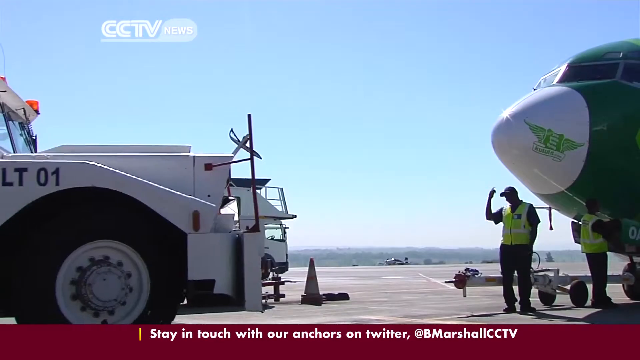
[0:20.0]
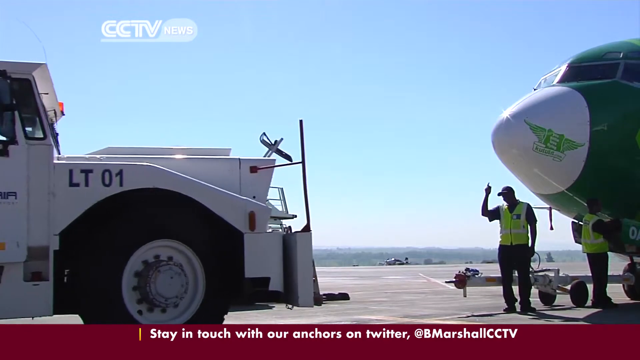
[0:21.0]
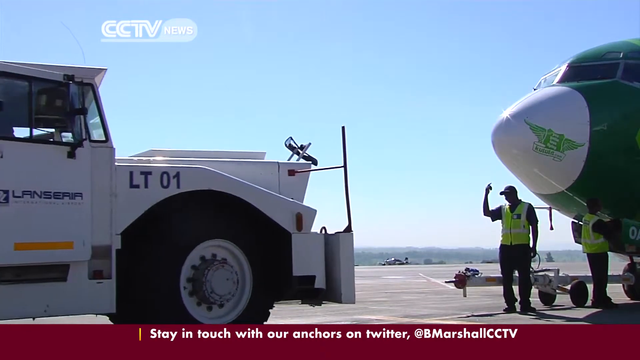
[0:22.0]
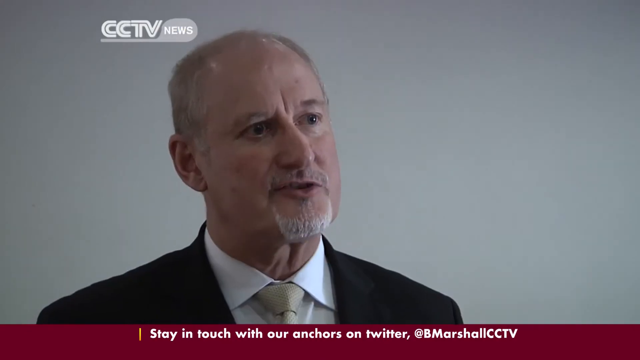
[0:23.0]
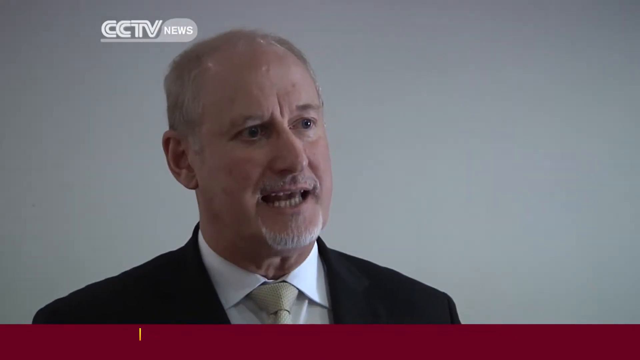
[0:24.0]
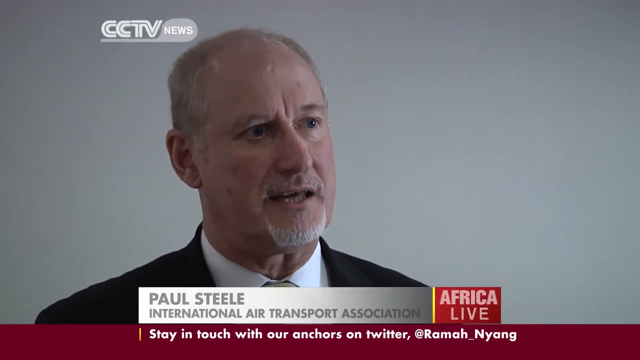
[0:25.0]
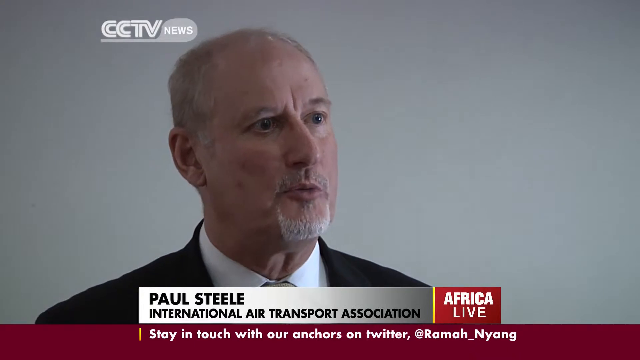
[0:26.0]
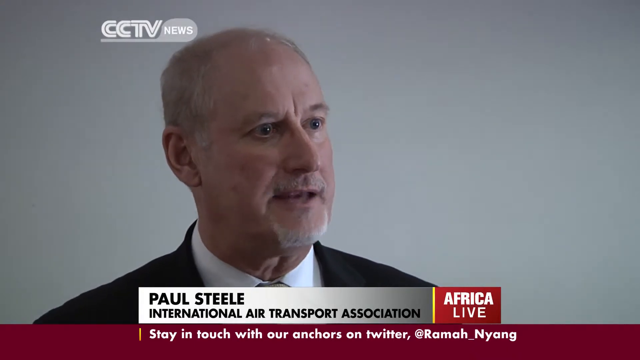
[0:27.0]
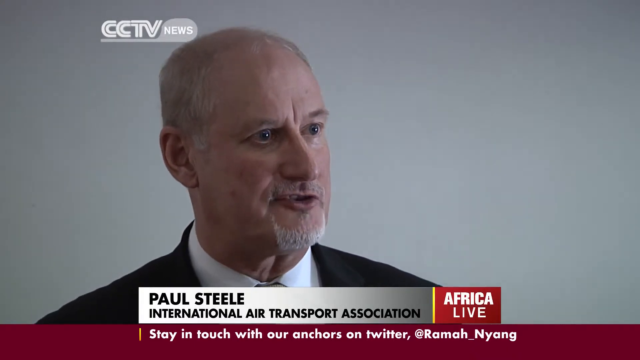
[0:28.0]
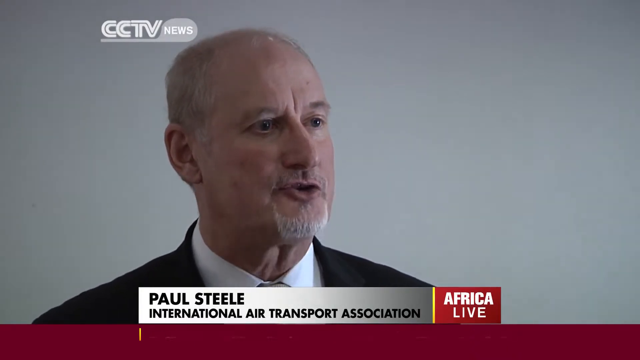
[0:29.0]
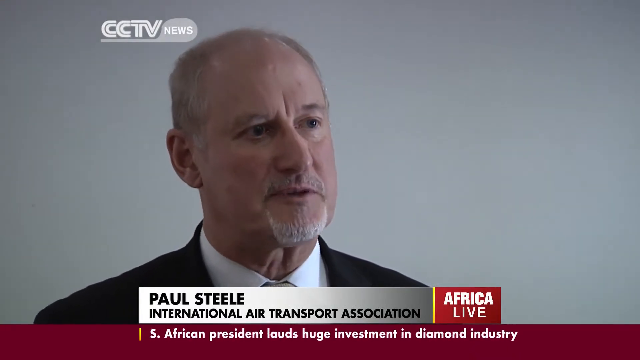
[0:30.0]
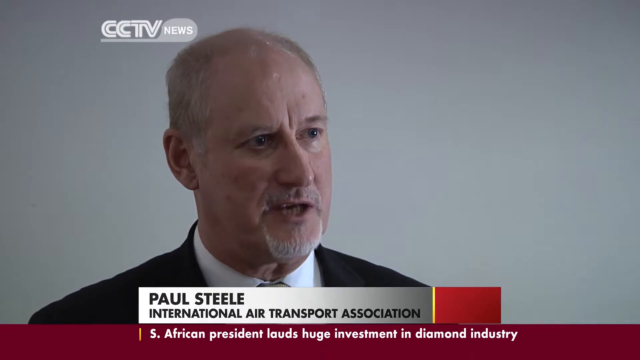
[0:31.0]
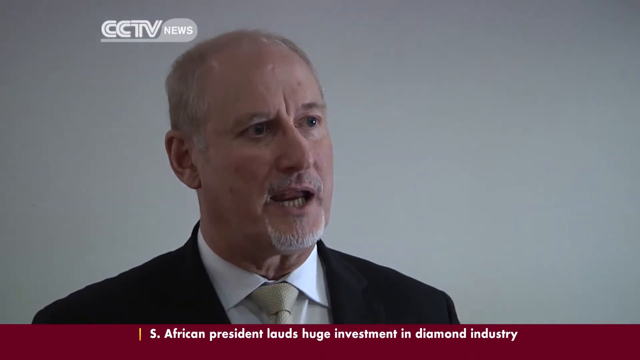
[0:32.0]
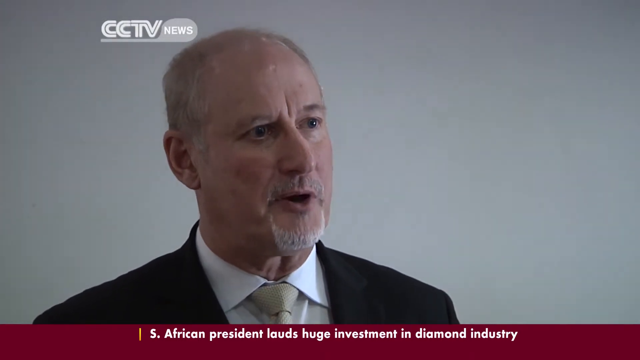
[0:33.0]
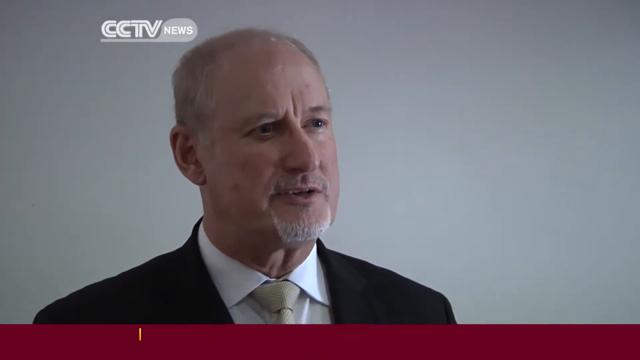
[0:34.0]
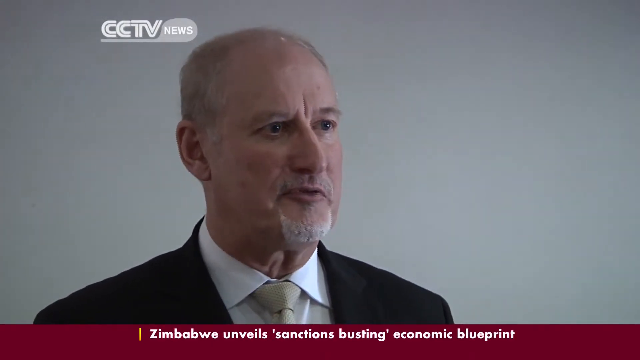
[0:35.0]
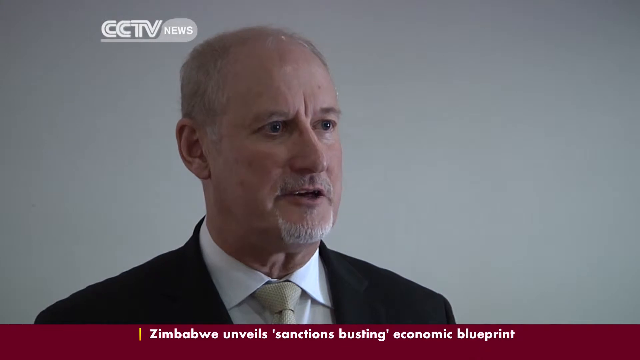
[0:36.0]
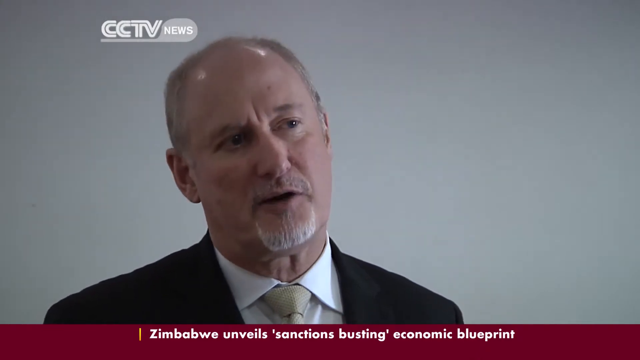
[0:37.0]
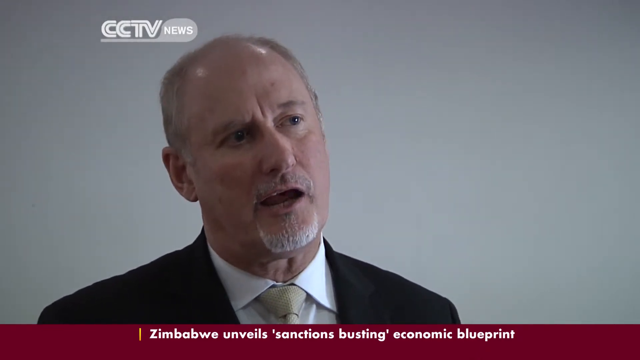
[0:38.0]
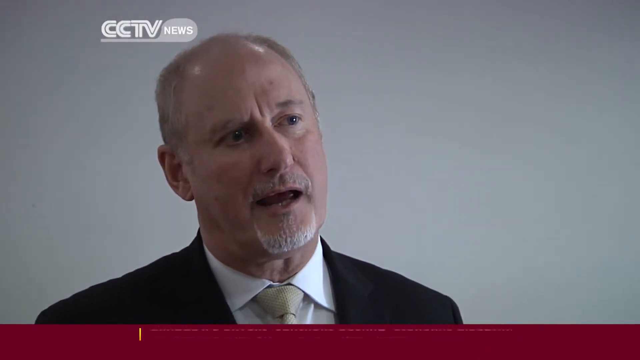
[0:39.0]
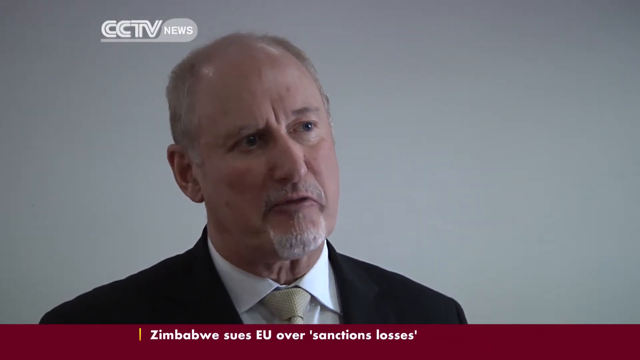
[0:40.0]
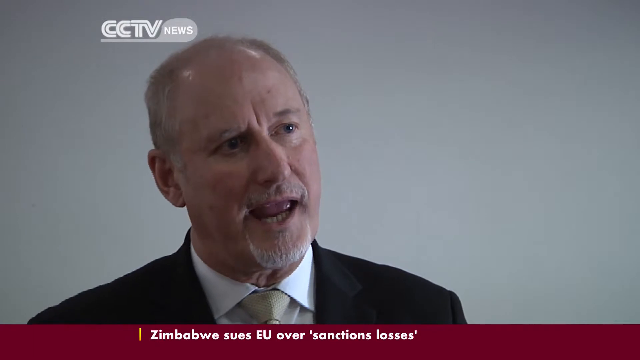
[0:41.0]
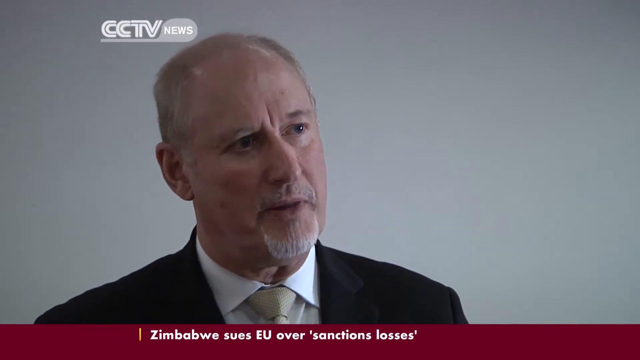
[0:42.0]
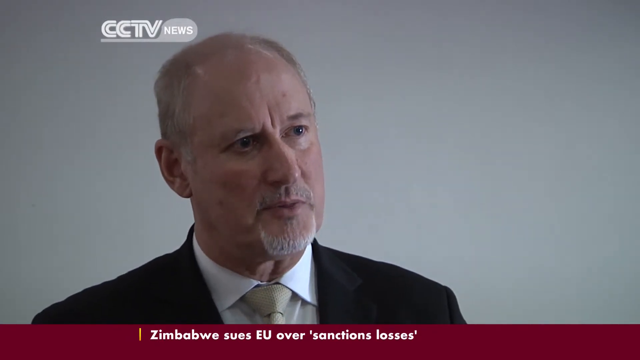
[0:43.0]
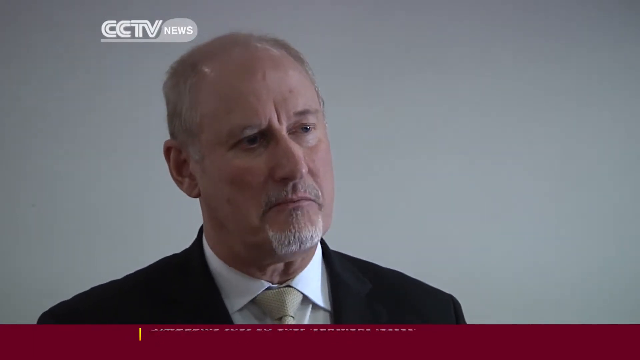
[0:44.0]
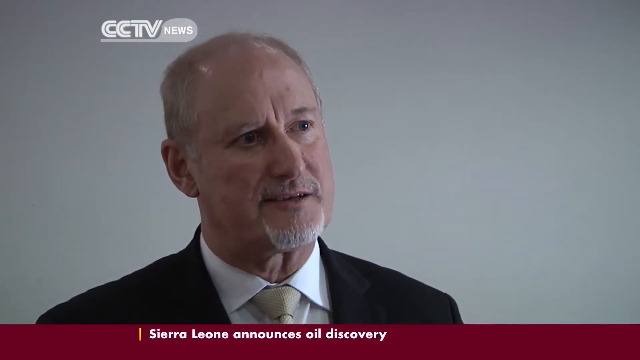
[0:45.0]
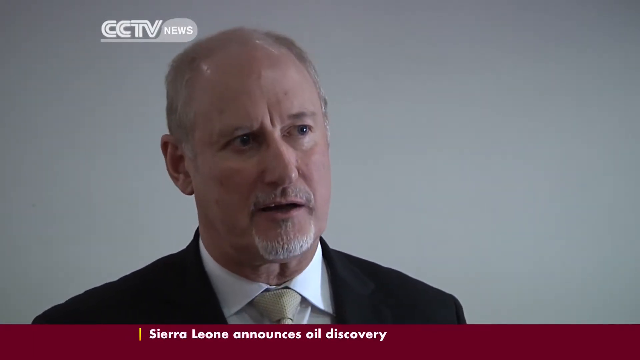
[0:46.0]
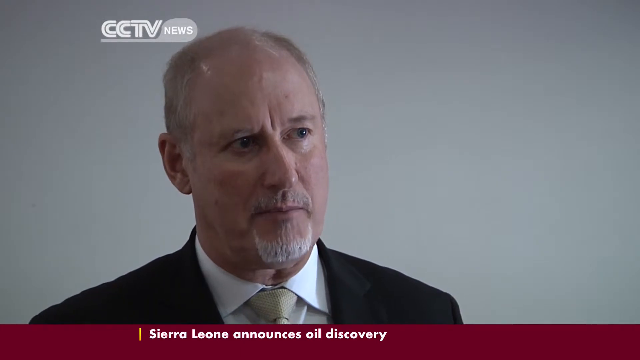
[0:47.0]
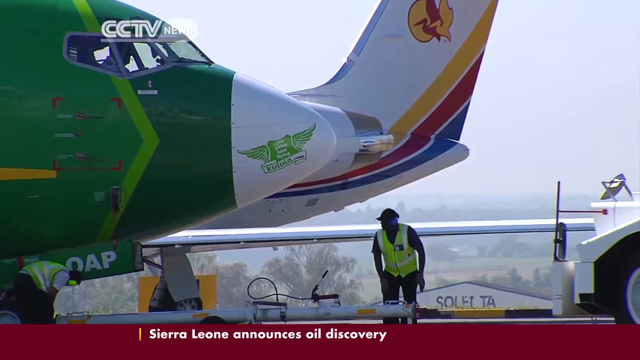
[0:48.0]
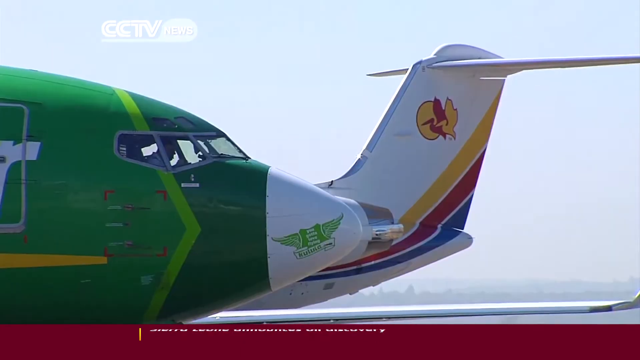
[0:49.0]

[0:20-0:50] A white truck drives straight toward the Europcar airplane. On the white nose, in the middle, is an all-green emblem: a box with an E in it, wings on both sides of the box, and a ribbon underneath bearing a message that cannot be read. Two men are already out working on the plane. The video then cuts to a man named Paul Thiel from the International Air Transport Association, broadcast via CCTV News on Africa Live. He talks throughout his segment. He has a small, neatly trimmed, somewhat gray beard right under his mouth and a little mustache under his nose, and he is balding a bit, with gray hair. He wears a black suit, a gray tie and a white shirt.